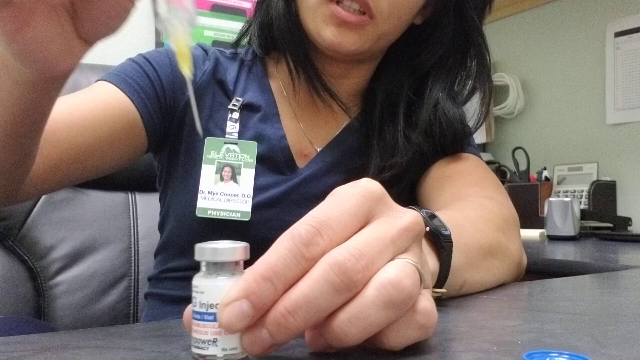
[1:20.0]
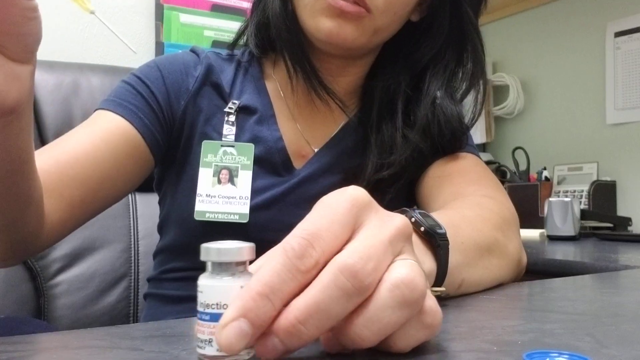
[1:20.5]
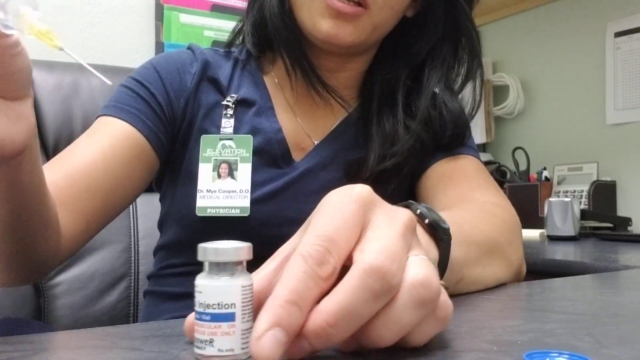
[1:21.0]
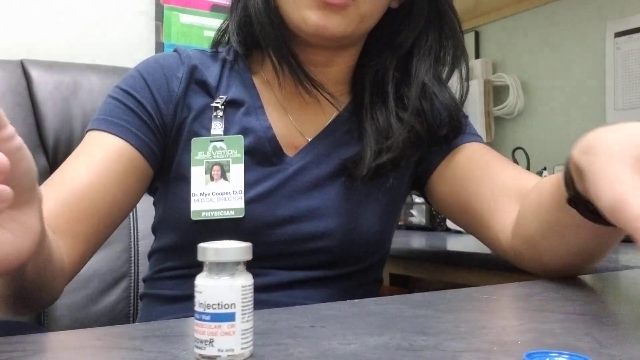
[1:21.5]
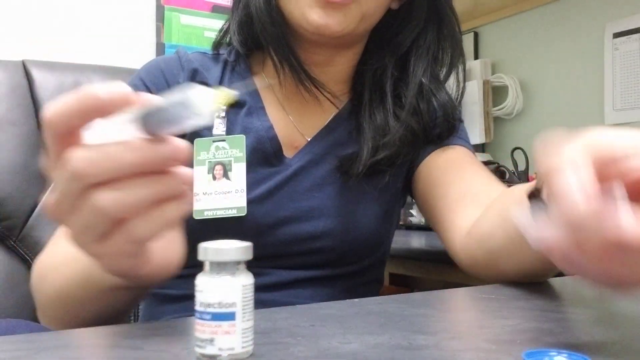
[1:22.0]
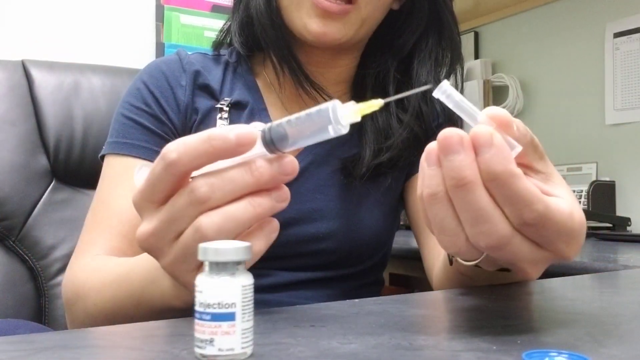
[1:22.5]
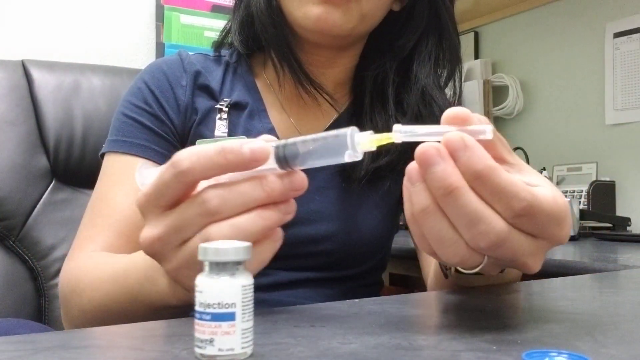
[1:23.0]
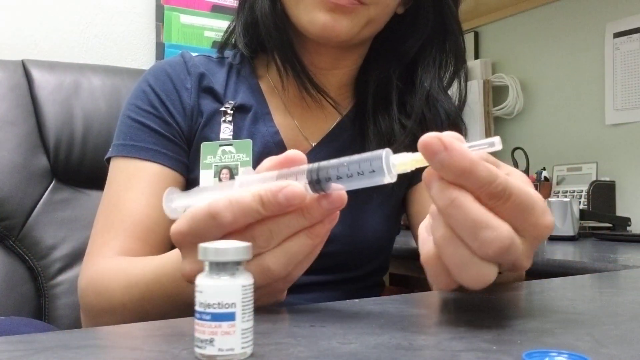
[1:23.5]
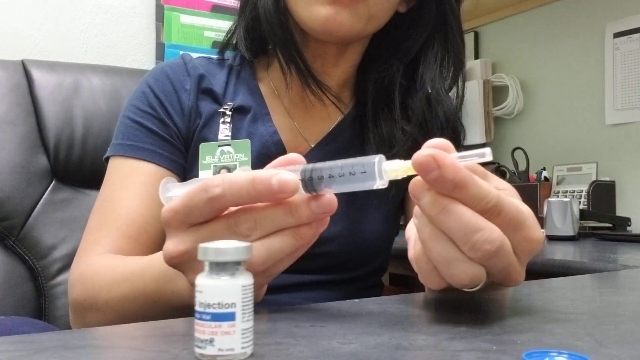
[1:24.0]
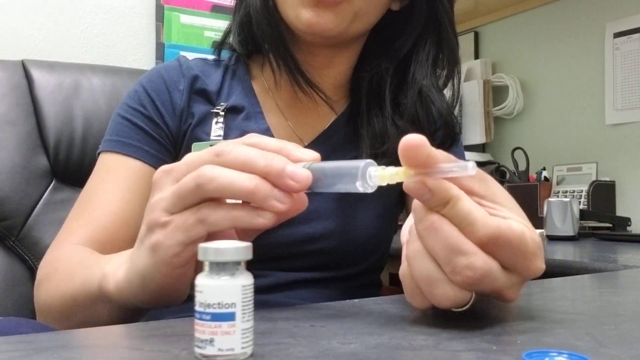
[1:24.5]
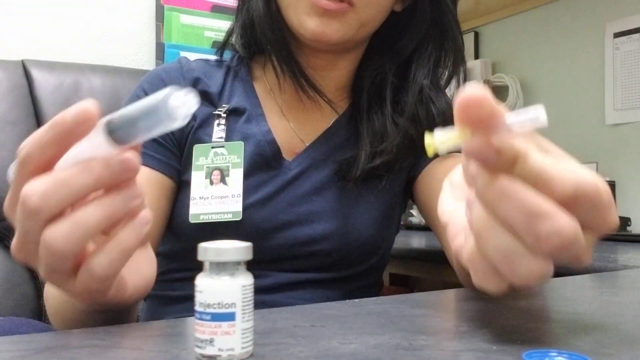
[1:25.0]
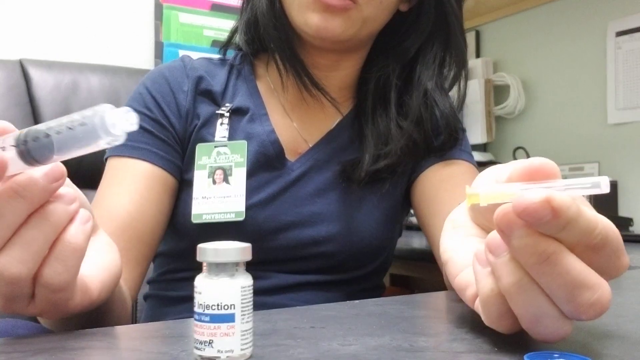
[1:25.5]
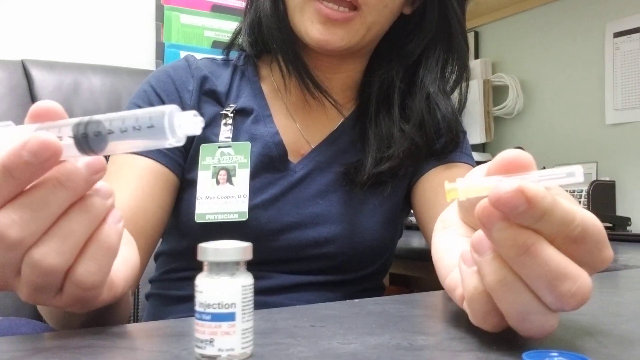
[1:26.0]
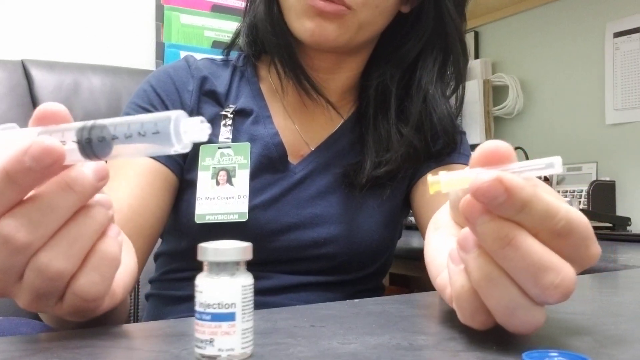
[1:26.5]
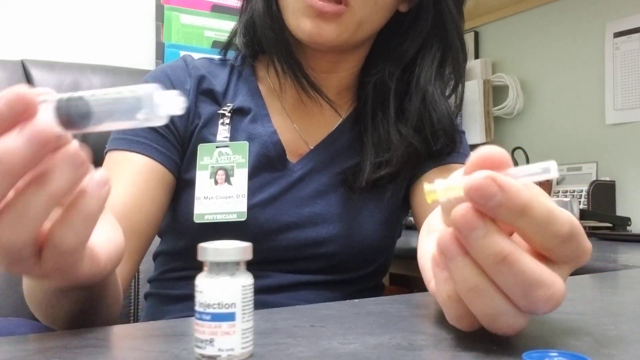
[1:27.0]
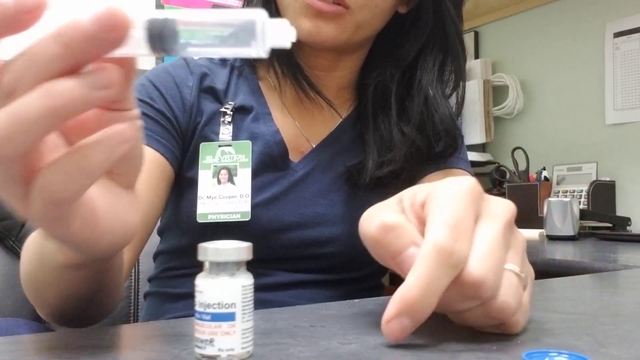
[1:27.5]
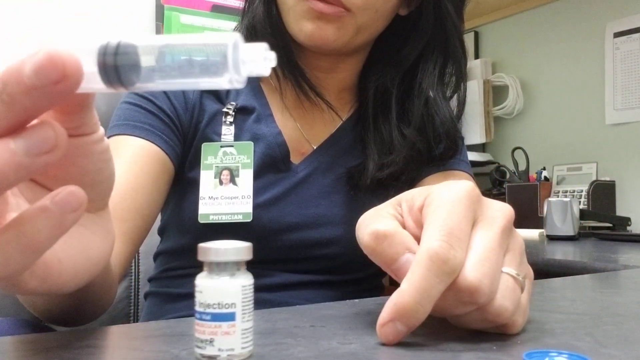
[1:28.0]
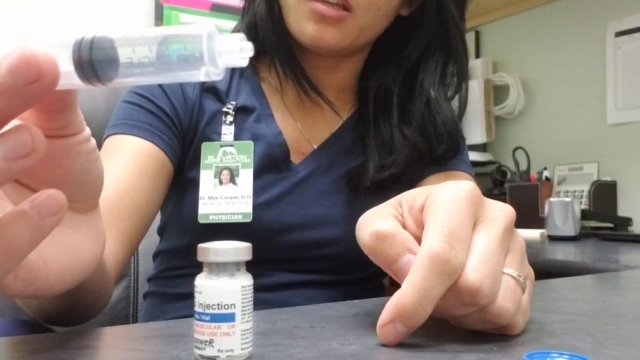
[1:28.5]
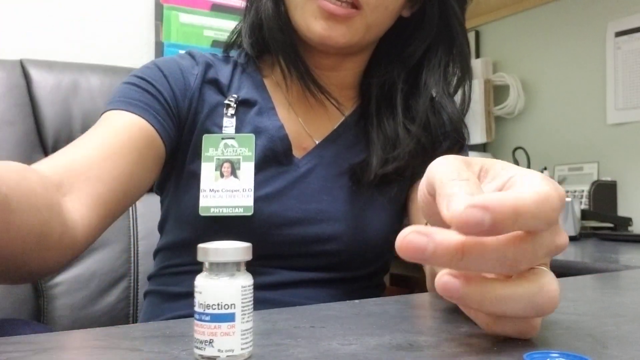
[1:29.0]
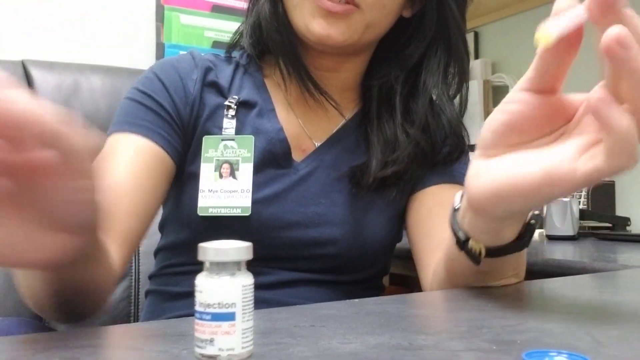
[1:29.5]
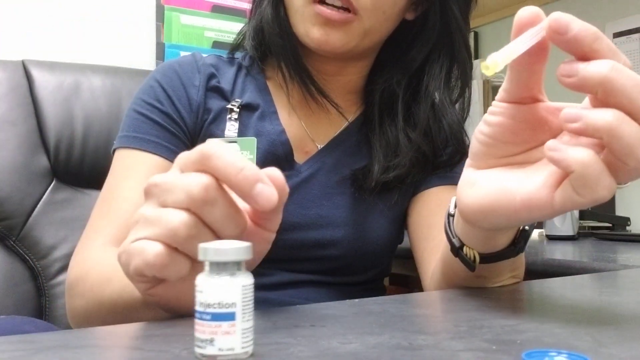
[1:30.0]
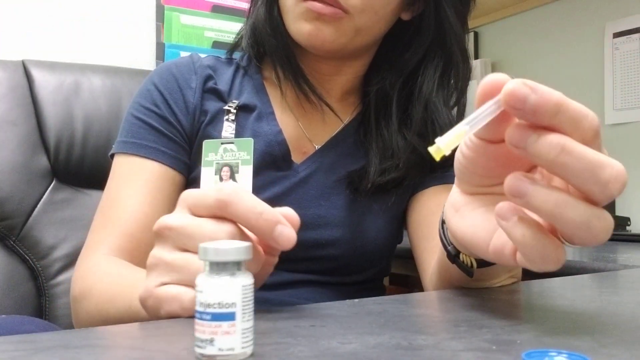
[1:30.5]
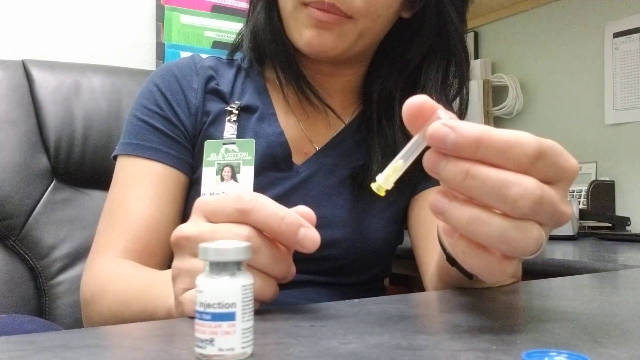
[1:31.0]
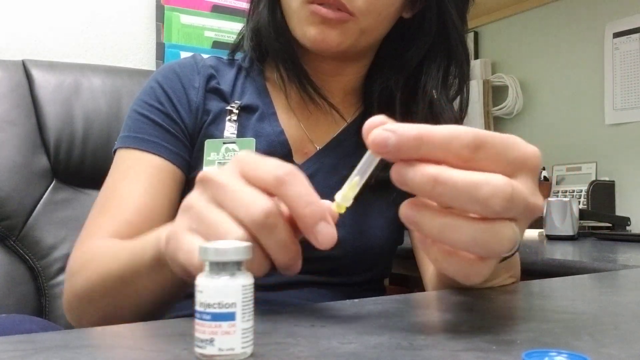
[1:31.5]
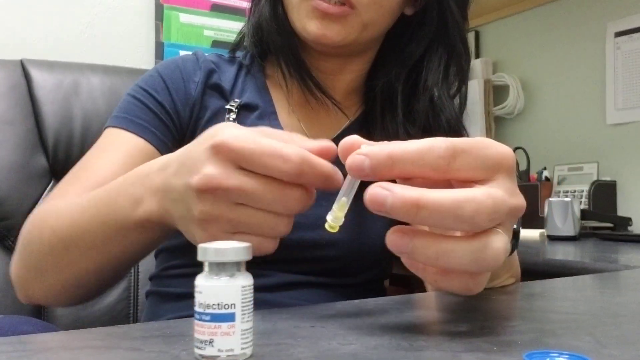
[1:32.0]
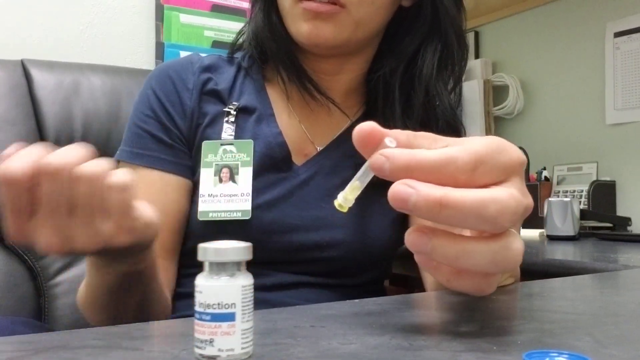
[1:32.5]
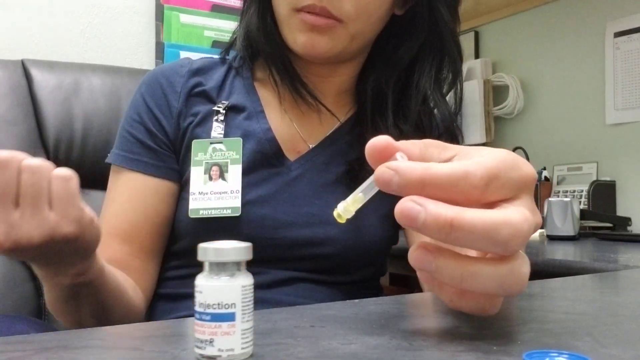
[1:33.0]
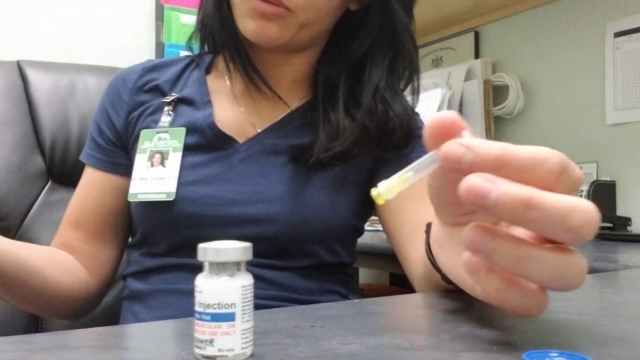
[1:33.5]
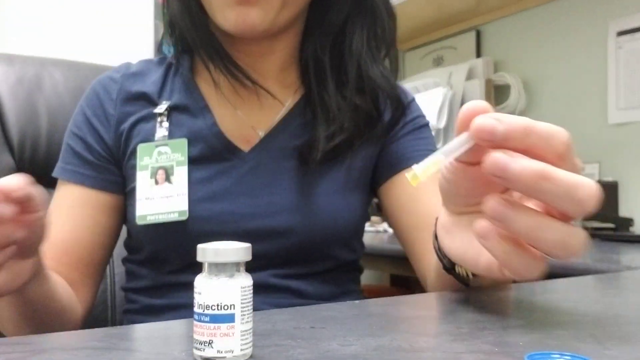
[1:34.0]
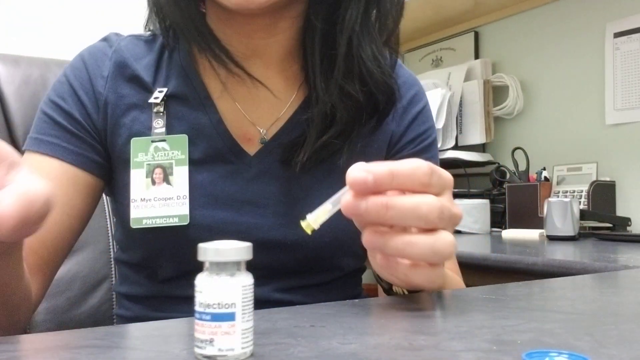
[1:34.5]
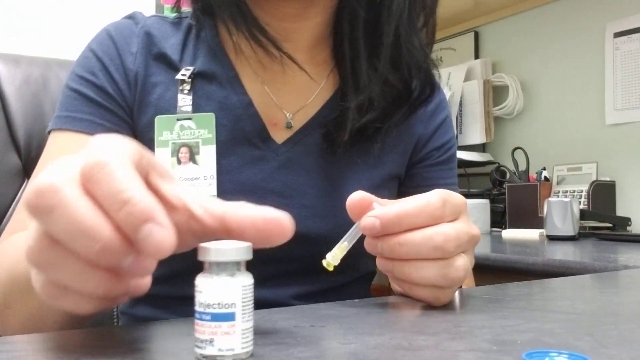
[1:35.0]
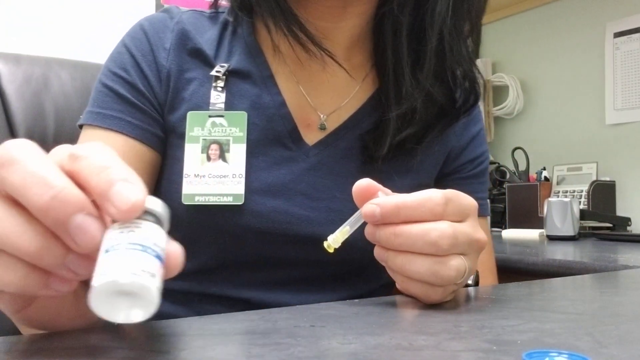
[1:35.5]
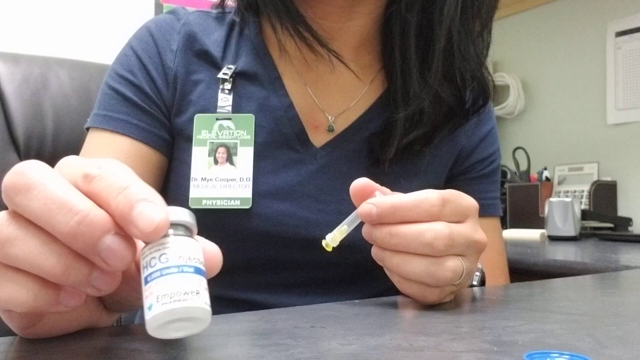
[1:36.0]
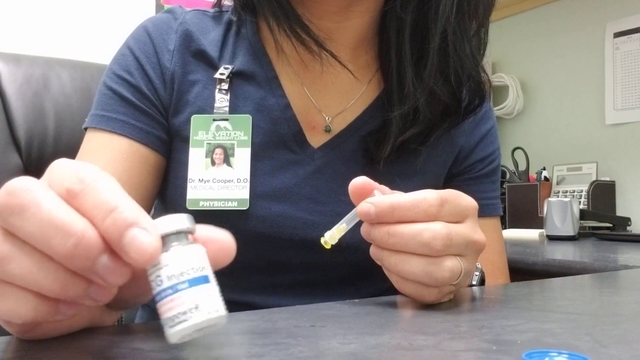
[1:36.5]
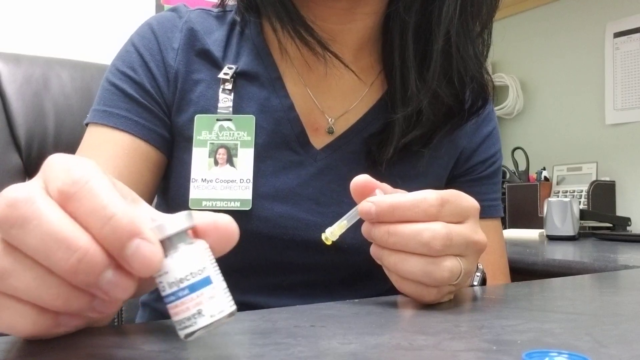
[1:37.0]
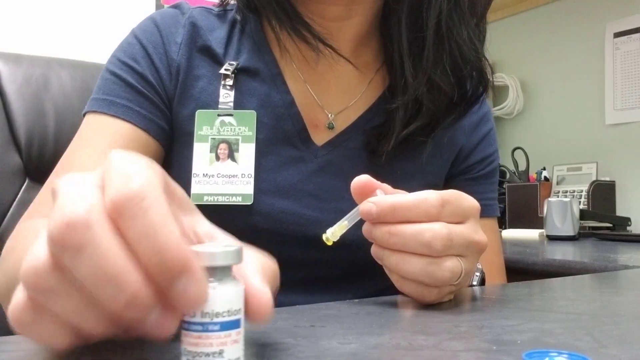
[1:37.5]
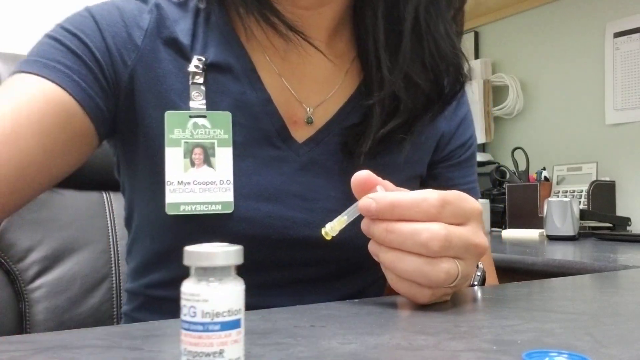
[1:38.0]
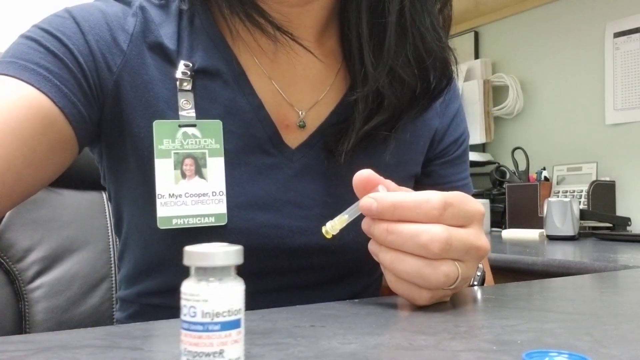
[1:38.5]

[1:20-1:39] A medical employee in navy scrubs, with her ID clipped to the right collar of her scrub top, holds an injection device in the top right corner of the screen; it is made of clear plastic with a needle at the bottom. In her left hand she holds a bottle, and she is sitting at a desk in an office. She finishes extracting liquid from the pill-bottle-sized bottle and then places a protective cap over the syringe, center screen. Her face is not visible; she is seen seated, from the lips down to her waist. She then removes the cap at the end of the injection device, holds it up to the camera, and speaks to the camera. She shows a close-up of the device while speaking and gesturing with her hands, holding its tip in her left hand, as the bottle of medication sits in the bottom left corner of the screen.